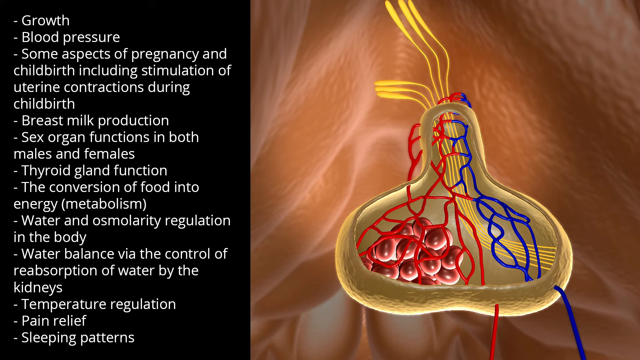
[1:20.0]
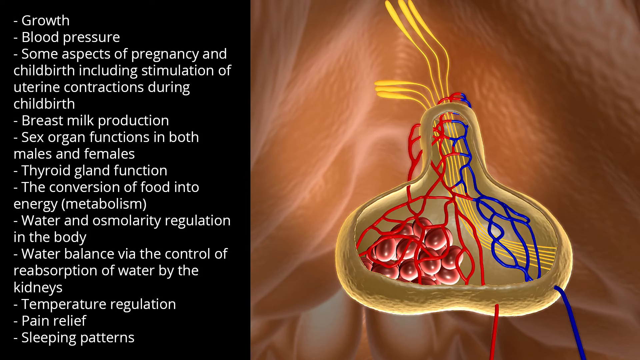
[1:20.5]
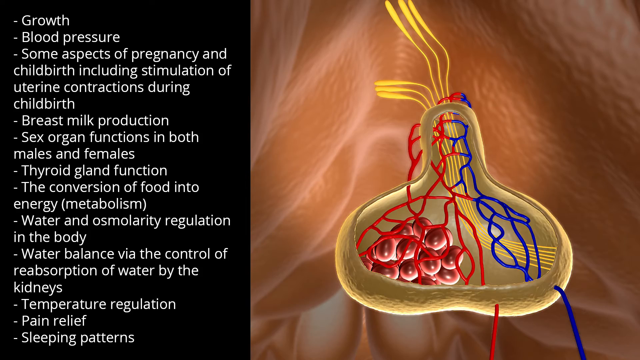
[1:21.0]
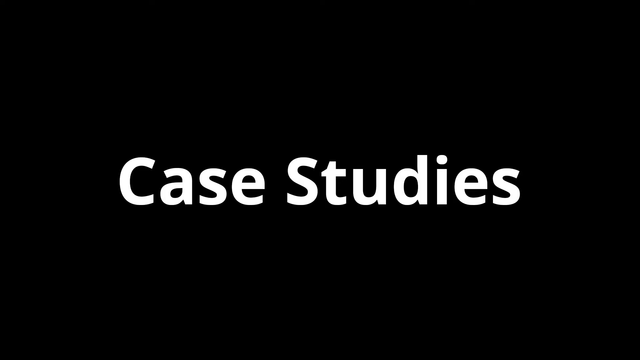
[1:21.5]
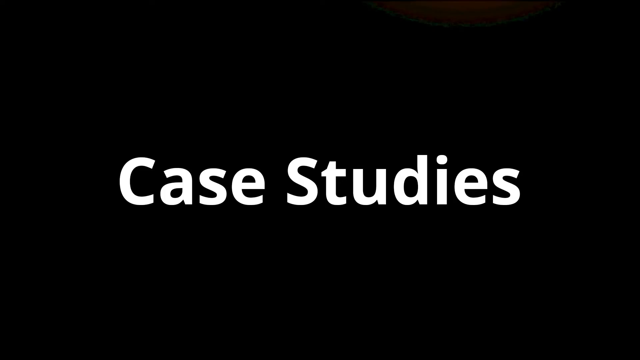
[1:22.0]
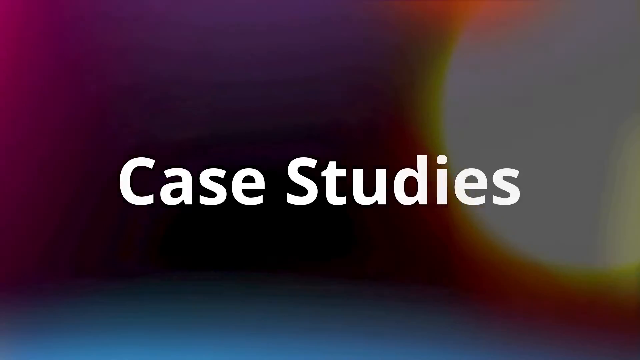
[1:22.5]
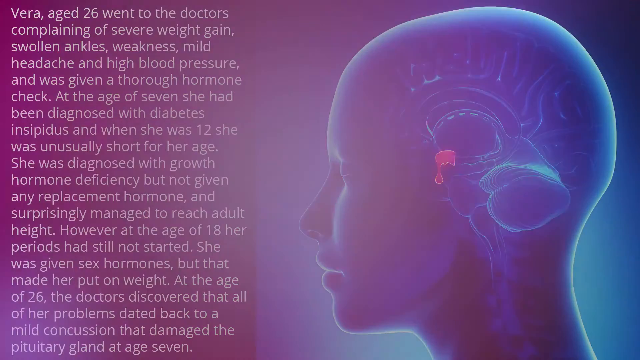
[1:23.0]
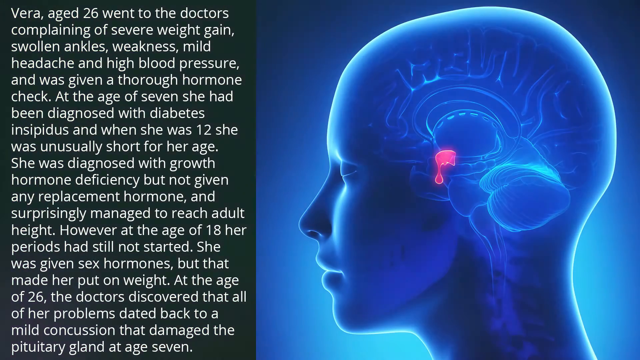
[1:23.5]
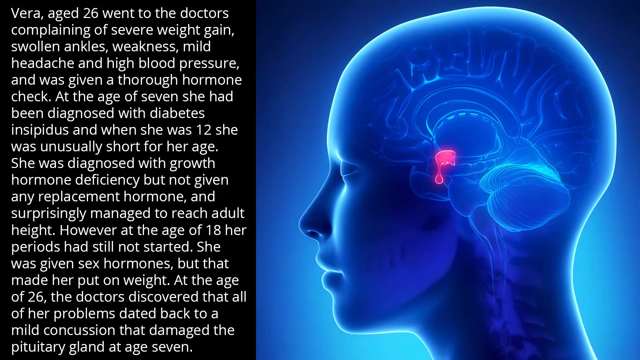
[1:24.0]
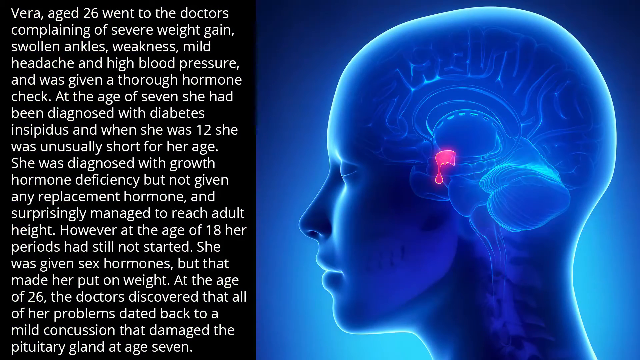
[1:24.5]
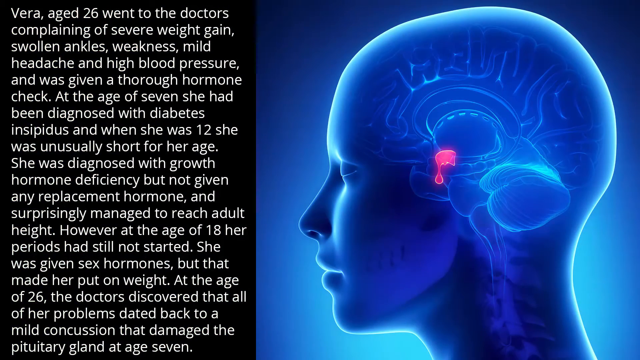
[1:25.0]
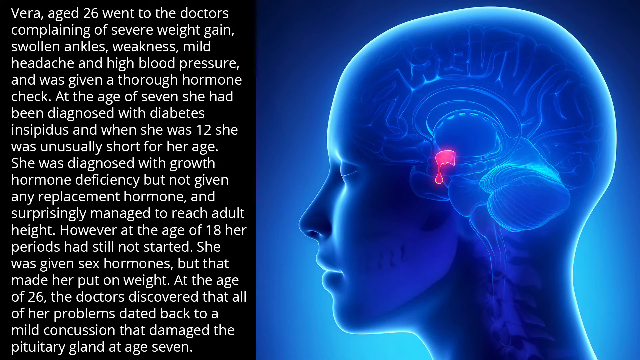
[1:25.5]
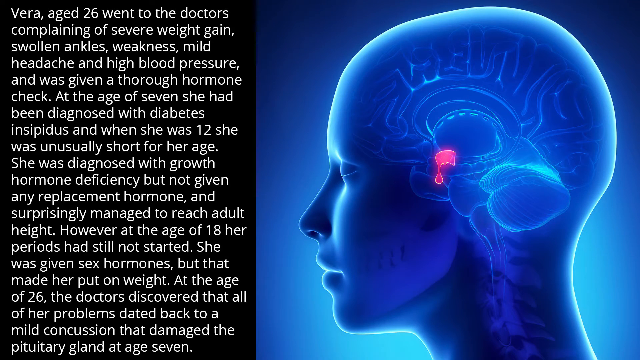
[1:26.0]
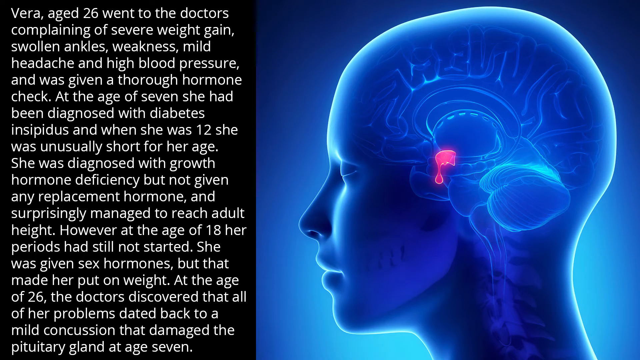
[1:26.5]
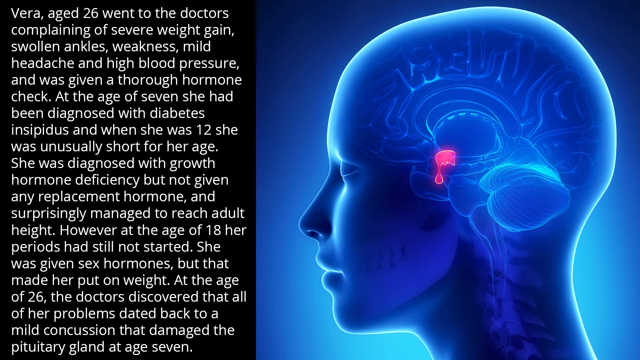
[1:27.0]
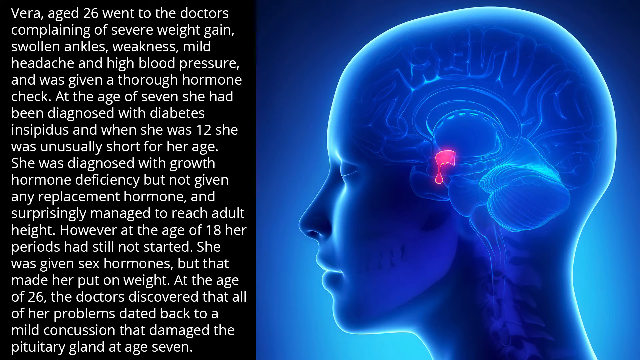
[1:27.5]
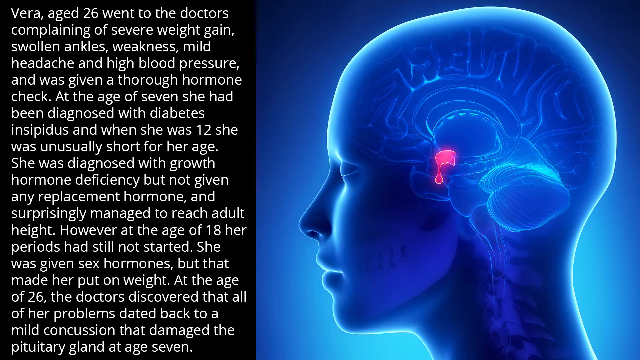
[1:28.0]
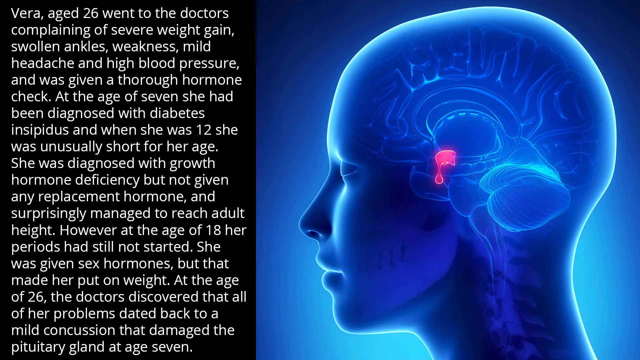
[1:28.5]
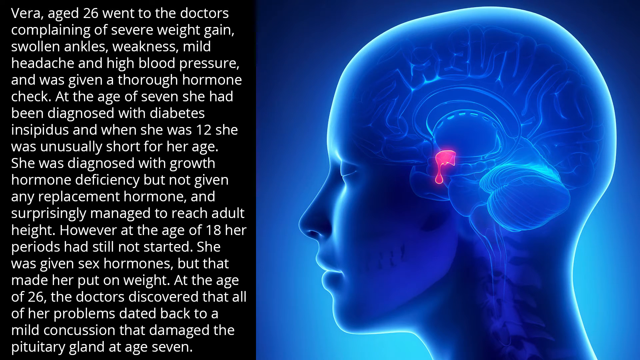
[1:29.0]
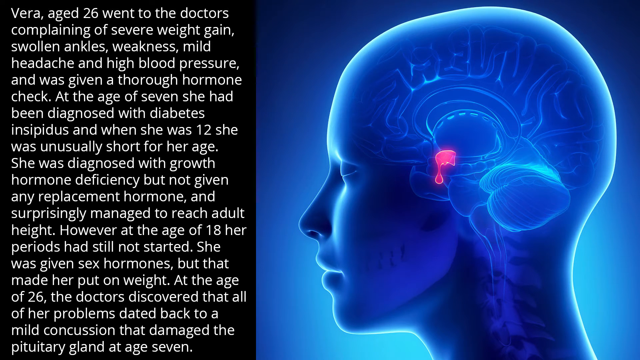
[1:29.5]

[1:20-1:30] The screen transitions to a blank background with white text that says "case studies", then to another page of information. It shows the same figure of a person with their brain and the pituitary gland highlighted in pink and red. The text describes the case of a person who experienced symptoms such as weight gain, swollen ankles and weakness, was diagnosed with diabetes and growth hormone deficiency, was not given any replacement hormones, and managed to reach adult height.